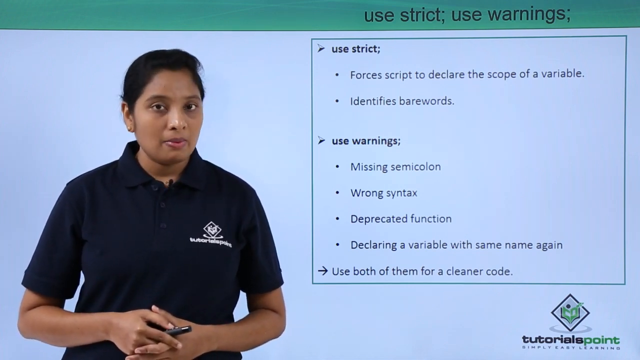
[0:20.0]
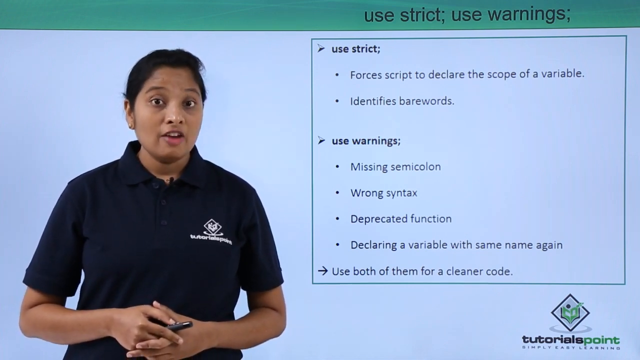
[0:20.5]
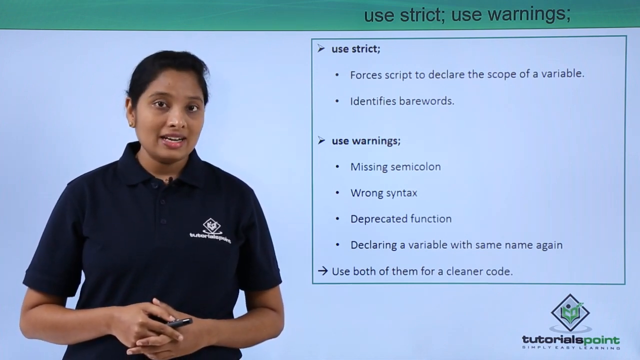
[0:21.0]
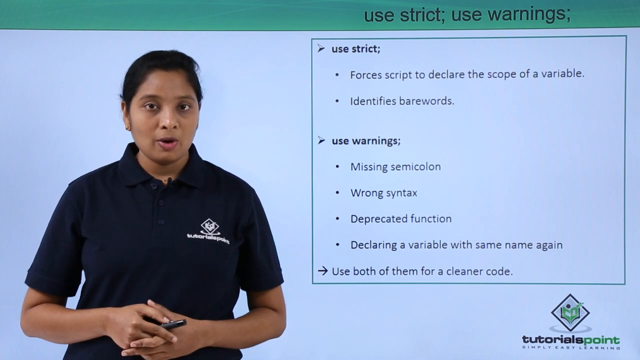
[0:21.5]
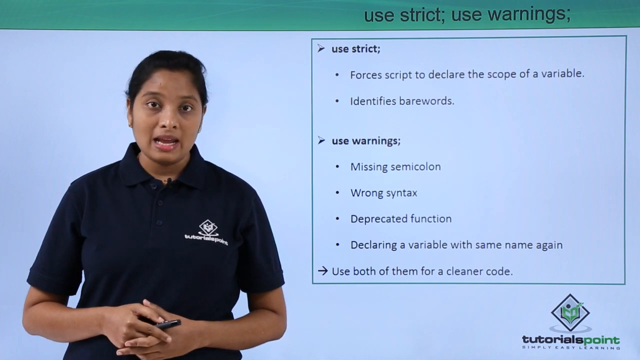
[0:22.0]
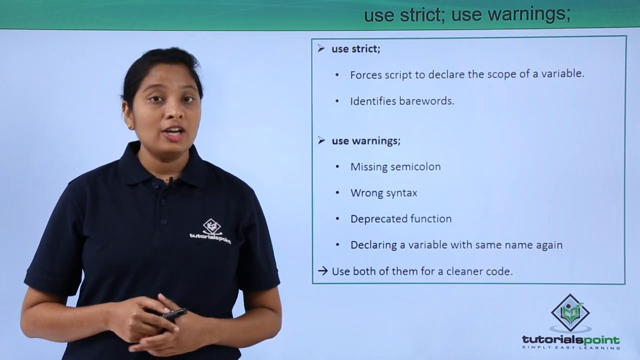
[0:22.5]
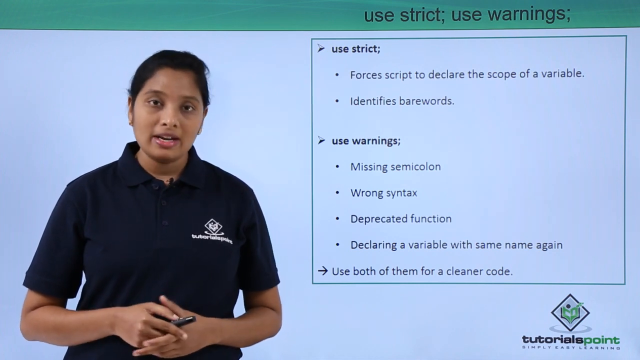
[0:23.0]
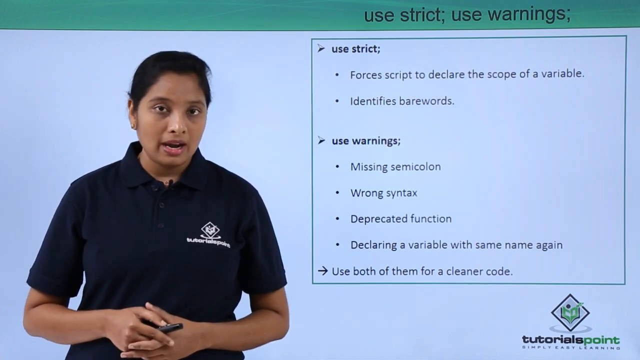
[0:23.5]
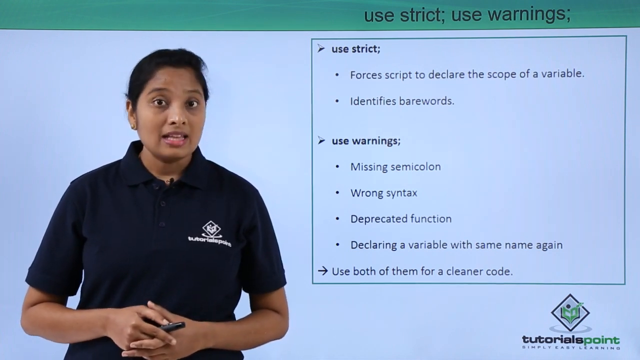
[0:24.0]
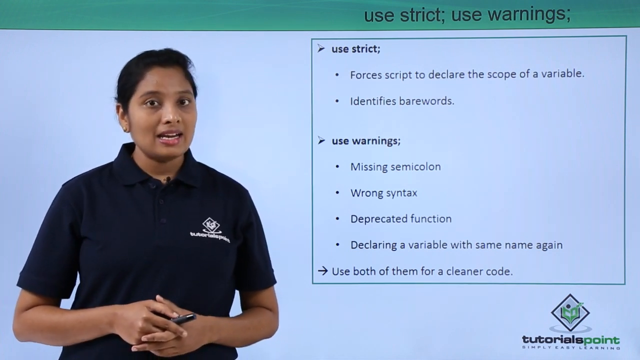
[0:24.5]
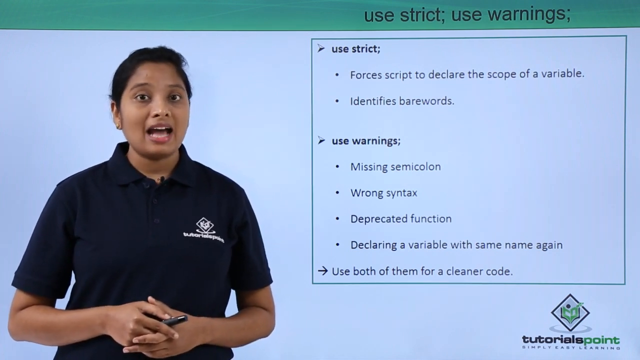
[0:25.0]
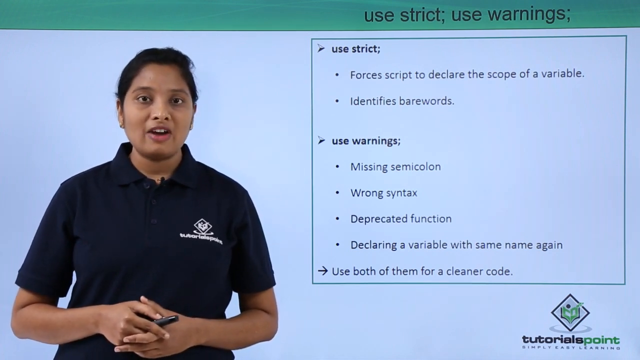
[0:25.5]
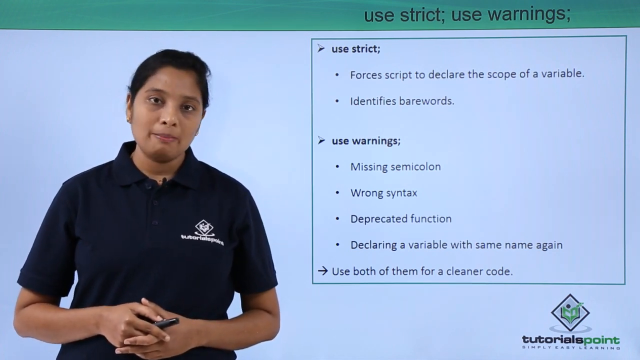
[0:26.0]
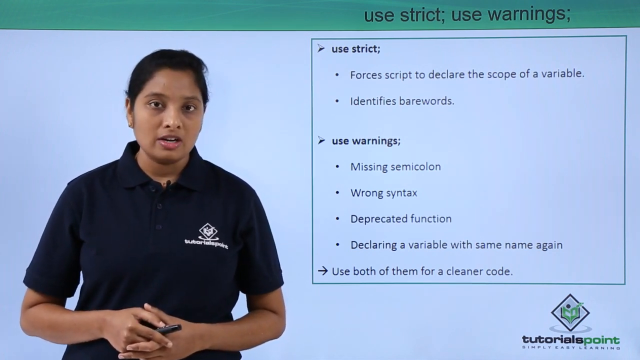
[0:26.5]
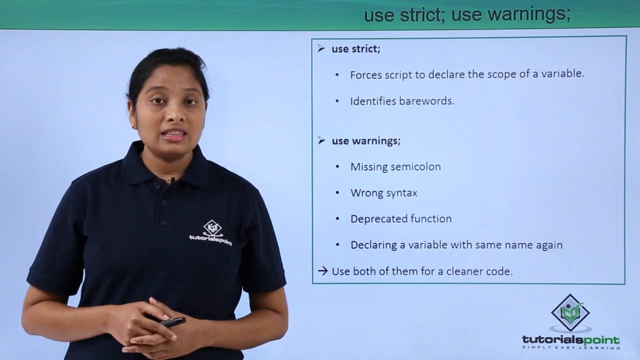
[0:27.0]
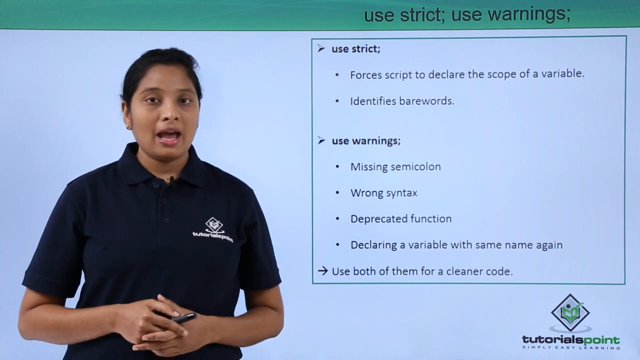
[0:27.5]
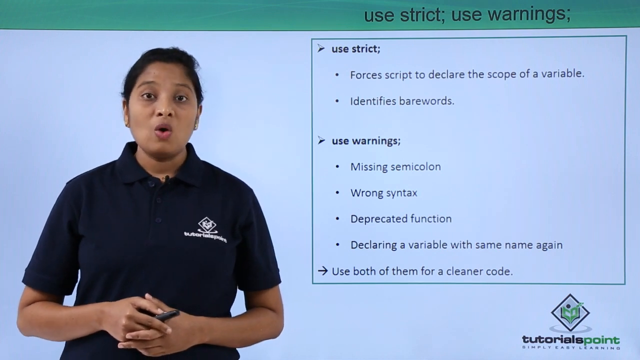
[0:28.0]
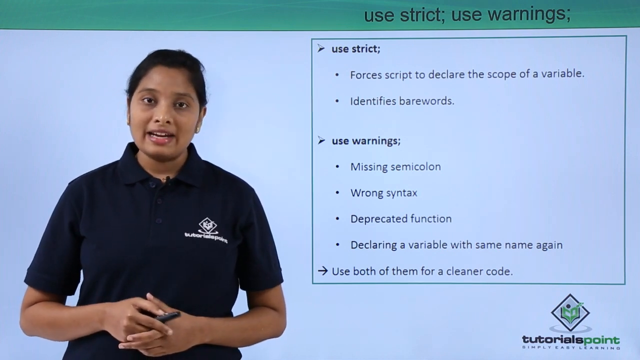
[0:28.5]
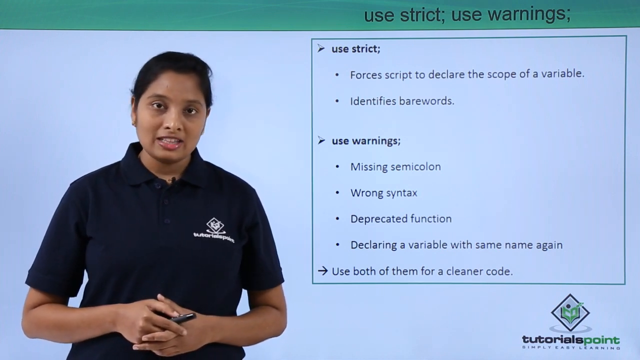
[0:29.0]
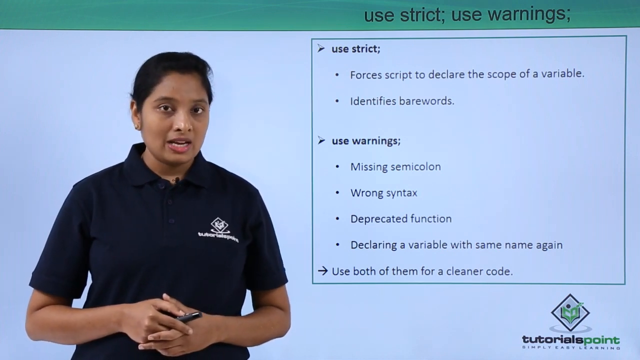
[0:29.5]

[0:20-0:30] The woman continues talking to the audience with her fingers laced together in front of her. She holds a pen in her right hand, between her forefinger and thumb. She moves back and forth as she speaks. Her black hair is pulled back in a low bun, and she has a very serious look on her face. She is very expressive, raising her eyebrows, and moves her head slightly from the left side toward the right side, as if moving a bit toward the camera.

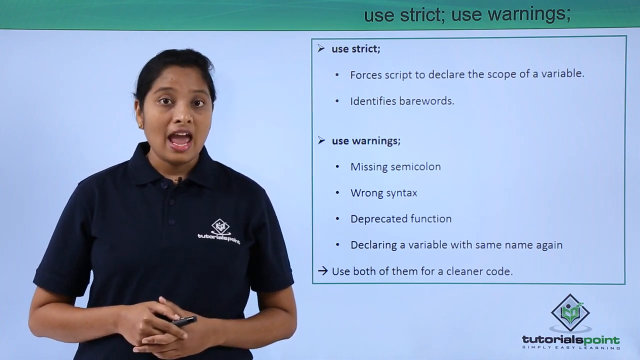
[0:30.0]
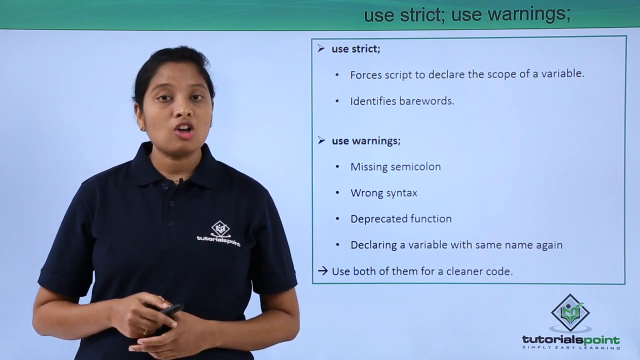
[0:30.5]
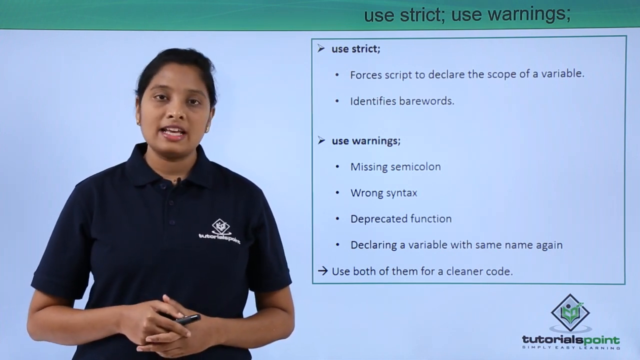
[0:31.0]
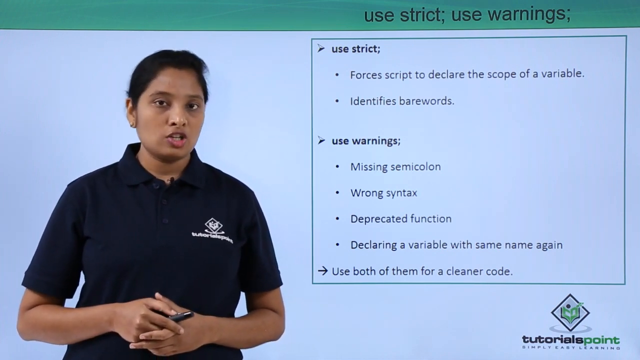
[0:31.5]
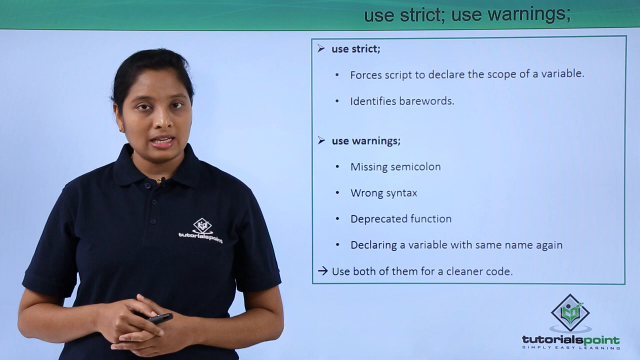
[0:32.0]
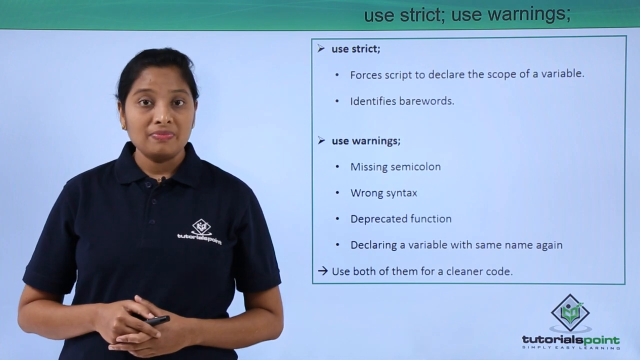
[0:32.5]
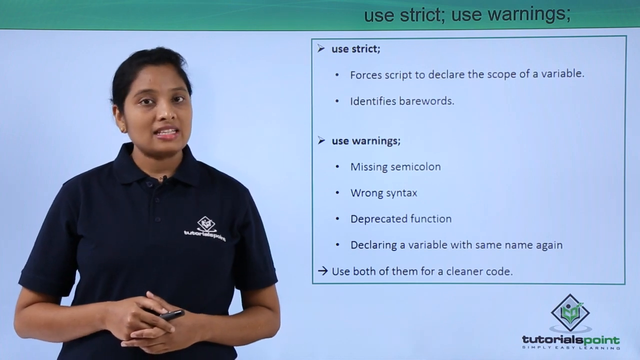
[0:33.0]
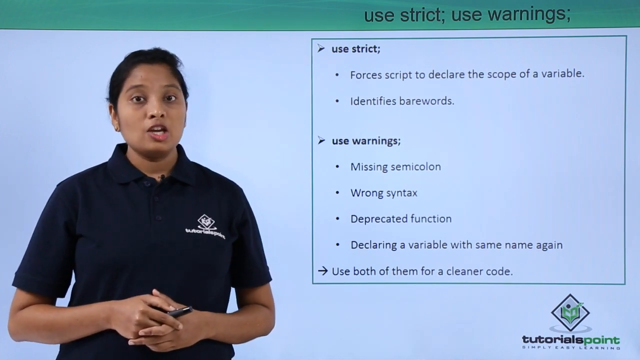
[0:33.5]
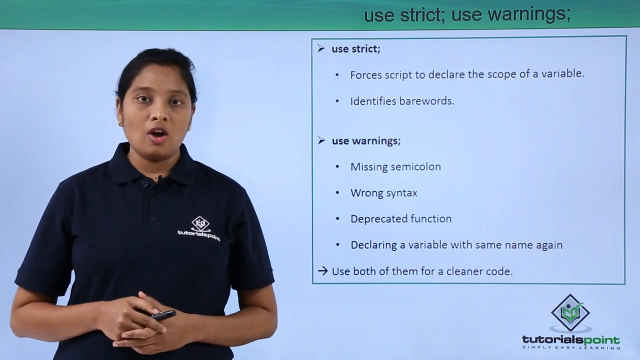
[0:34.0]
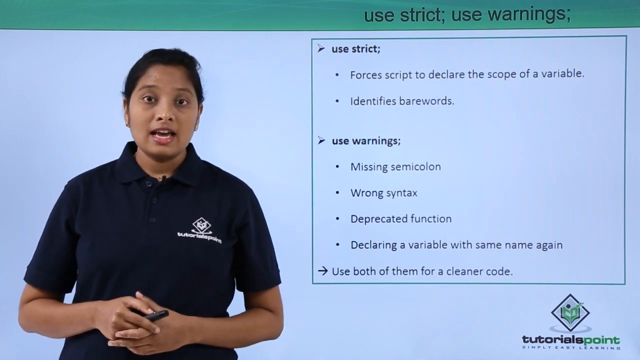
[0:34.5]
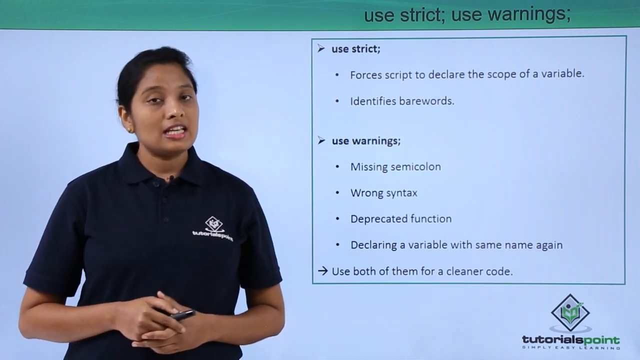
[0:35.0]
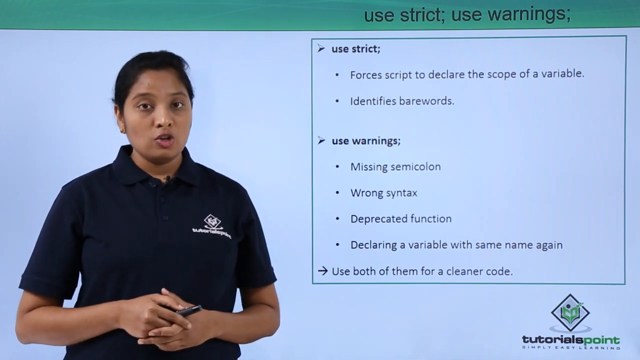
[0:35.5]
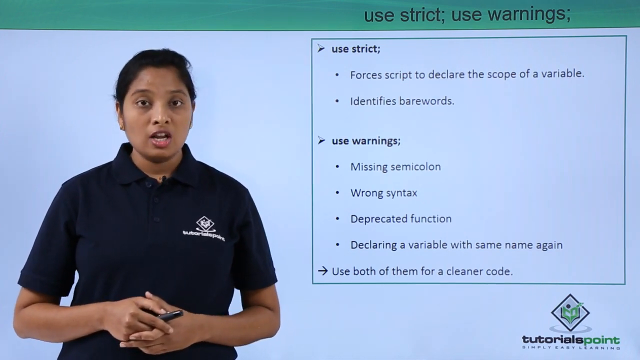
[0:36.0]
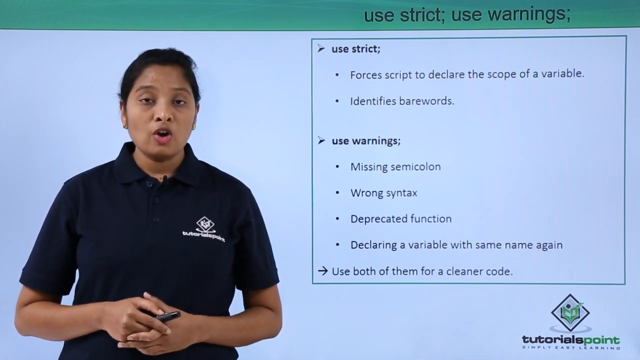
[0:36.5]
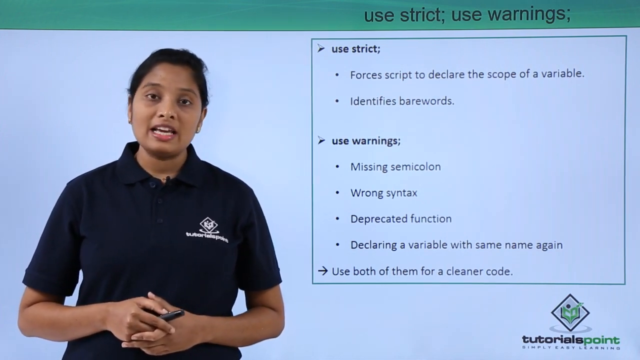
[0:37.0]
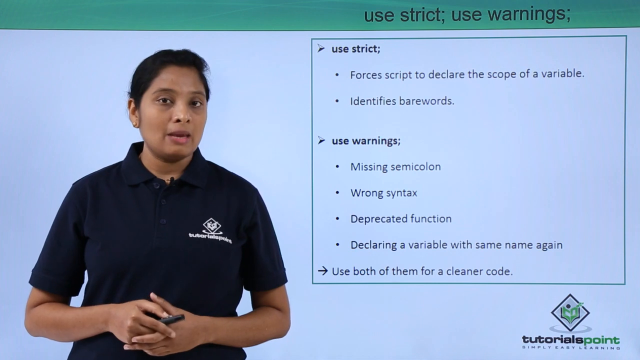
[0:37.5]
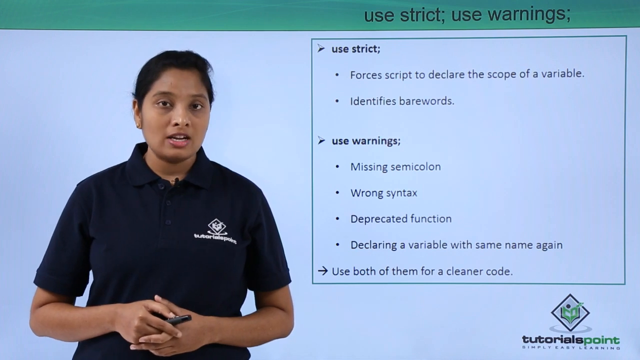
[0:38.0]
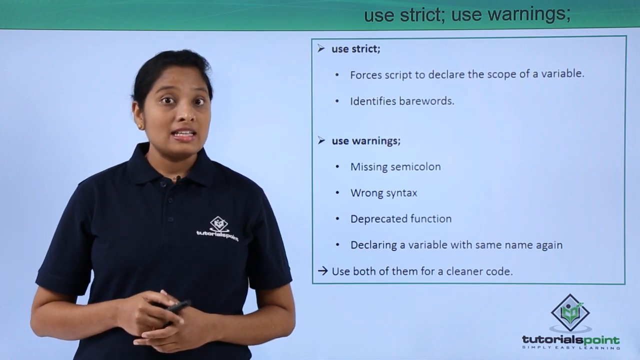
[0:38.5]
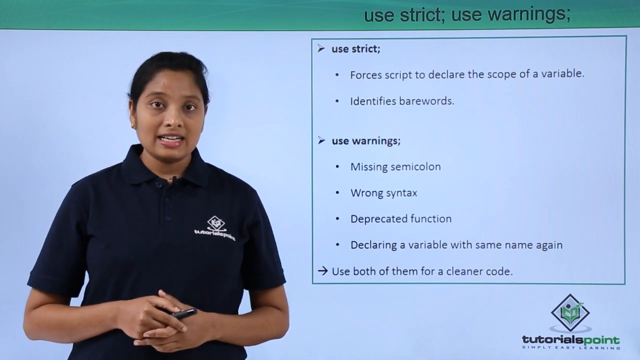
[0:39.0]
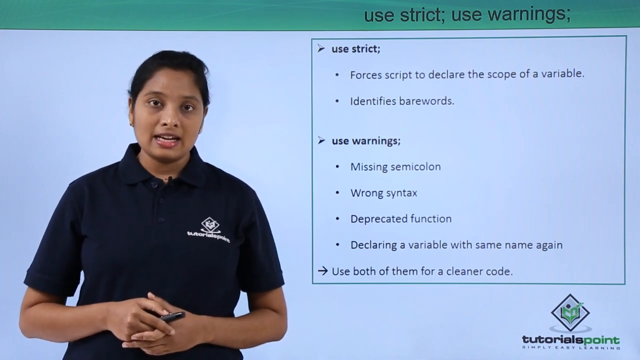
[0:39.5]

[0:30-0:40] The woman keeps looking straight ahead, speaking to the audience. Her upper arms are down at her sides, her arms bent at the elbow, and her fingers interlocked in front of her stomach area. She moves her body and tilts her head to emphasize her words. While holding her hands this way, she has a ballpoint pen in her right hand. She looks ahead with a serious expression.